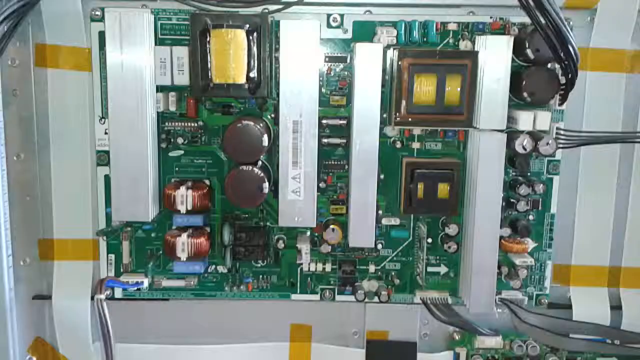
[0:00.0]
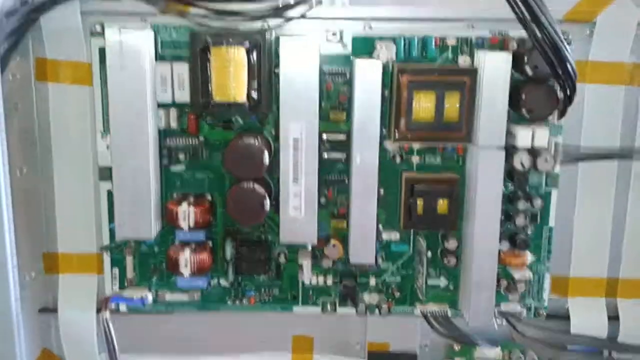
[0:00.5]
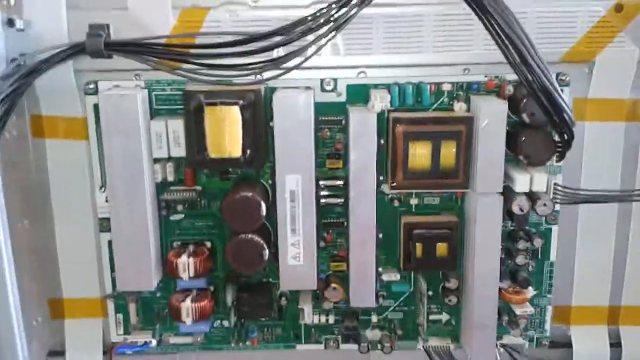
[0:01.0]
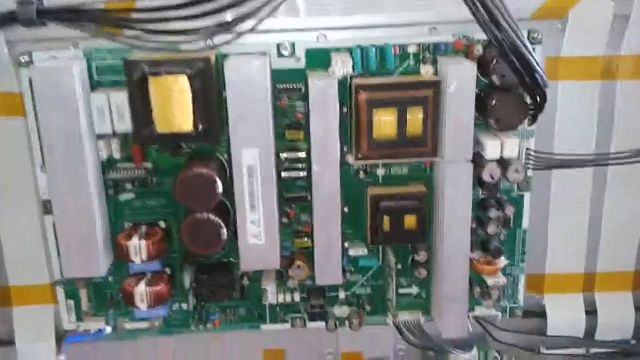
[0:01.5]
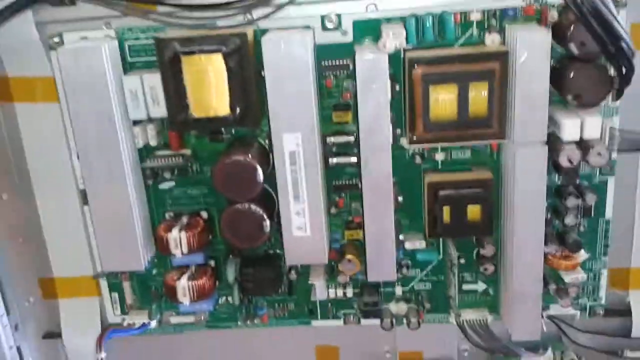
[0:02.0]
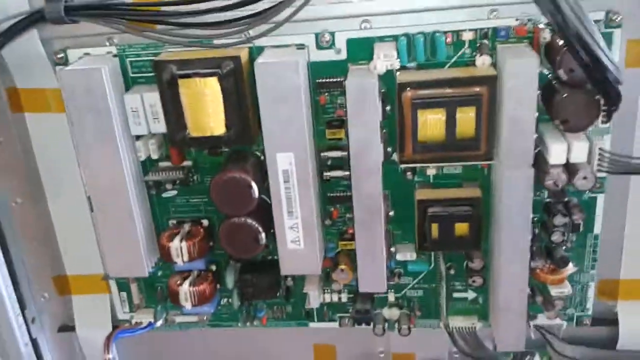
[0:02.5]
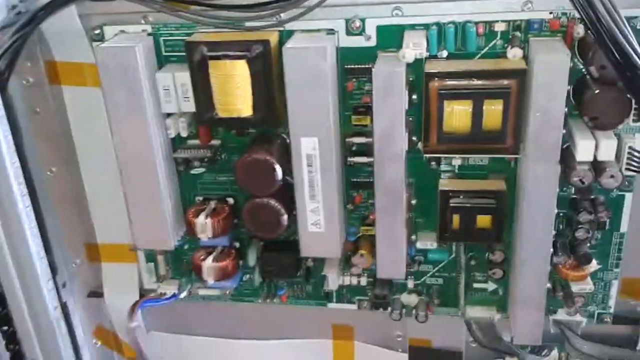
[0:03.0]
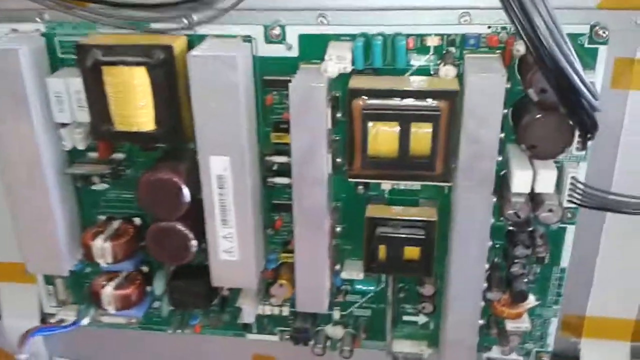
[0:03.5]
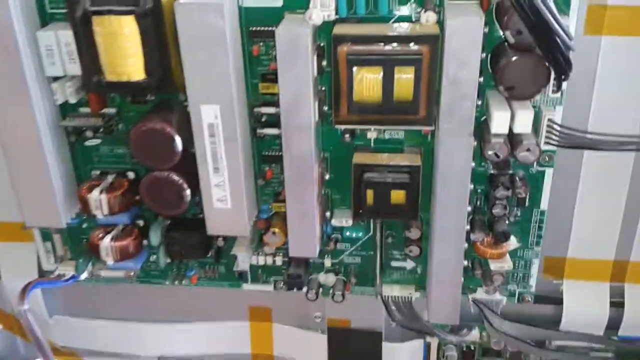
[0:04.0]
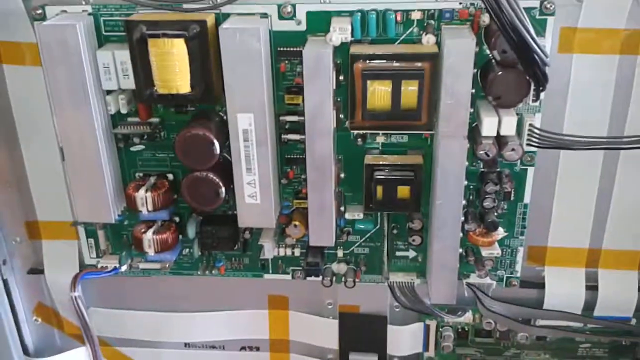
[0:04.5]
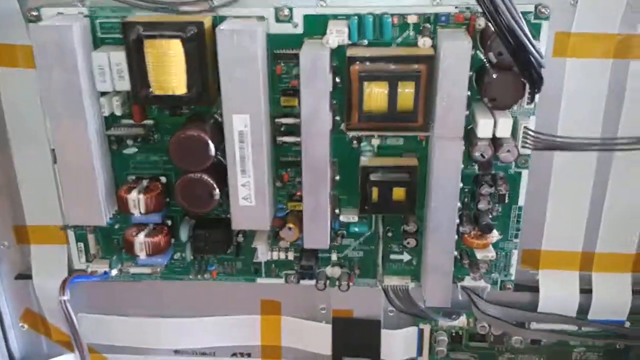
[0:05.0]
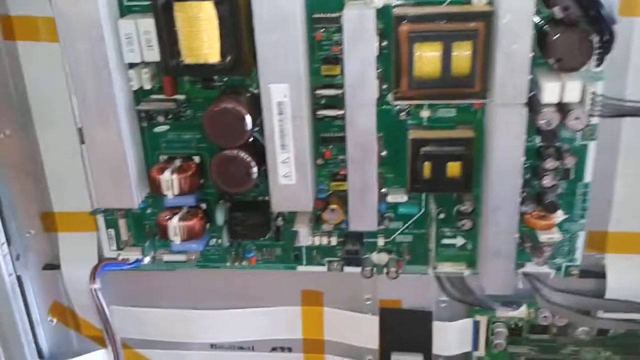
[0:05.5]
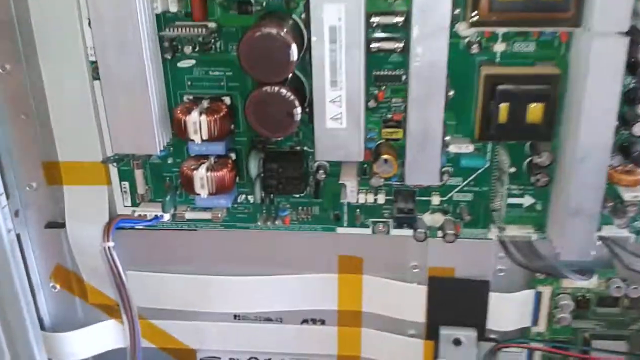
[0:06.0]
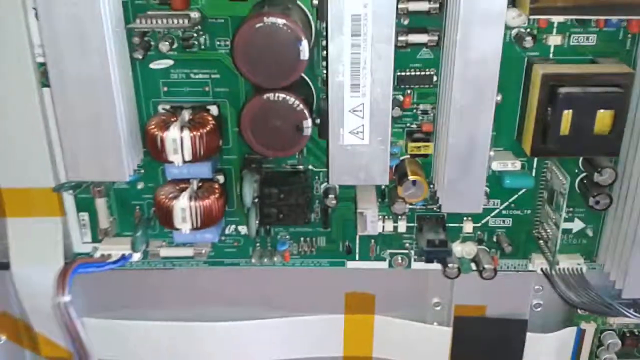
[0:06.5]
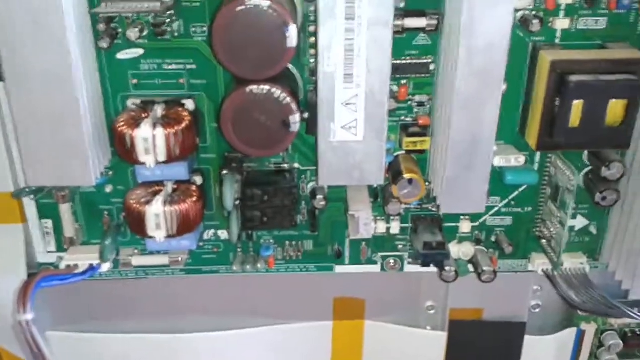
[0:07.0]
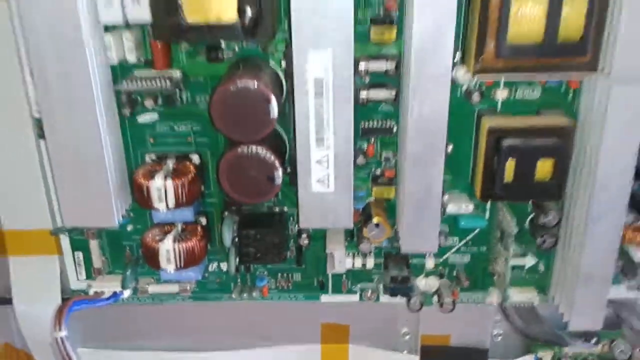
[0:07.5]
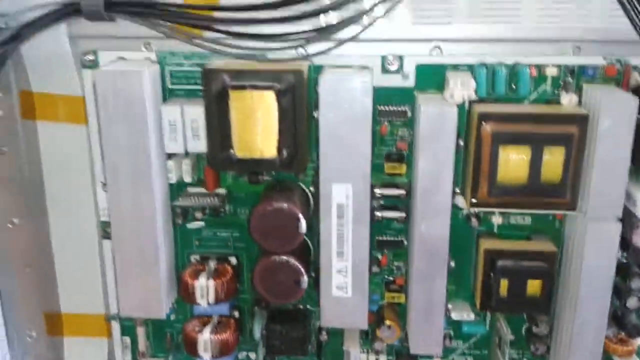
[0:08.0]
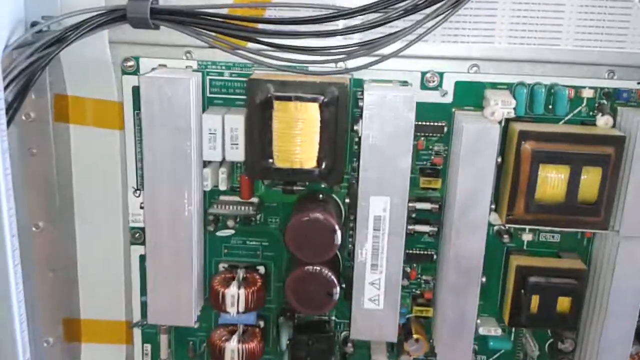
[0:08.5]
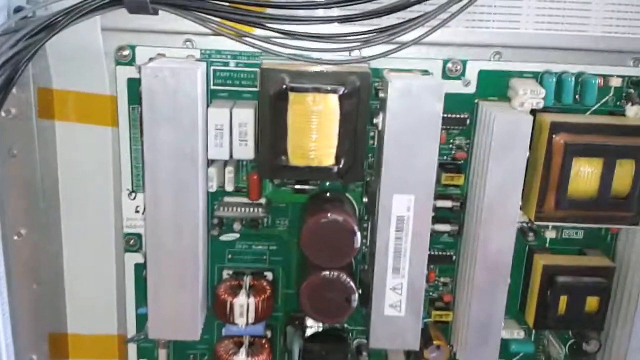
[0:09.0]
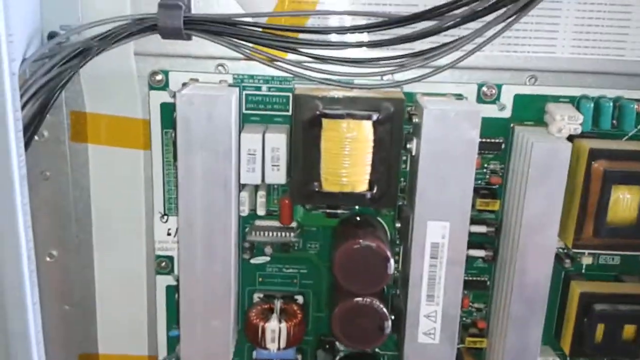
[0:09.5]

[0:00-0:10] A close-up shows a dark green circuit board. Resistors and capacitors are visible on it, along with transistors and small diodes in between the transistors. There are four integrated circuits and what appear to be two brown relay switches, with yellow wiring visible inside them. Inductors are also on the board. Two transistors have copper coil running around them, and each part is a different color: some of the diodes are green and red, and the transistors are green and blue. Black chips are in between the integrated circuits.